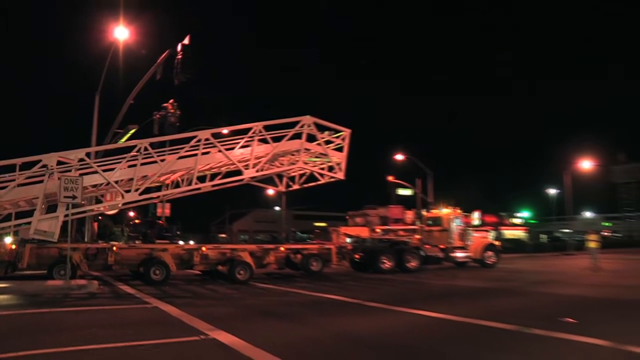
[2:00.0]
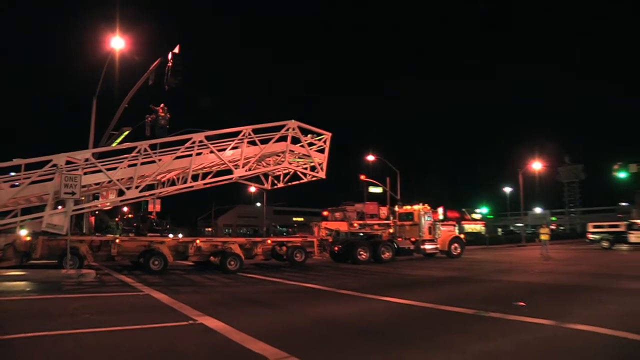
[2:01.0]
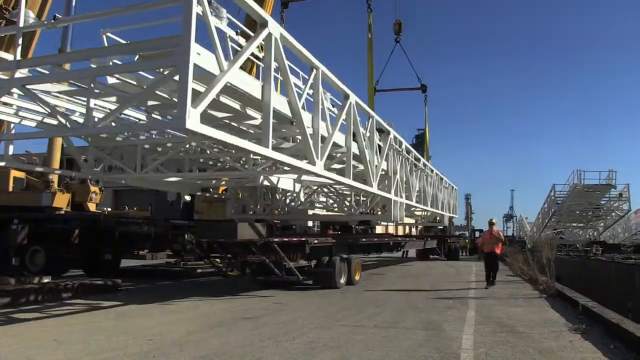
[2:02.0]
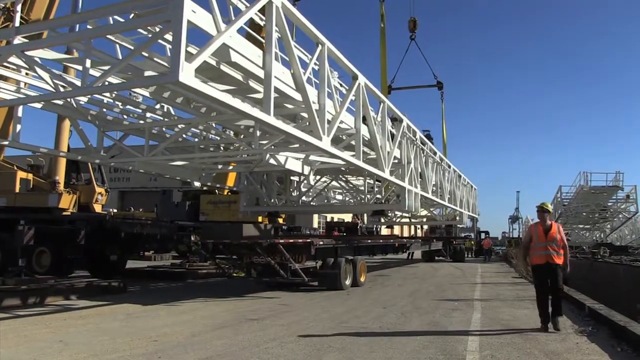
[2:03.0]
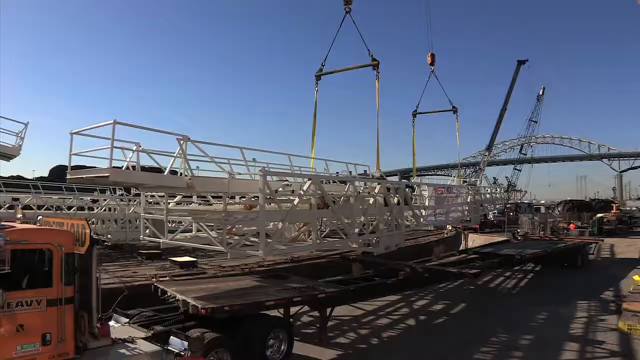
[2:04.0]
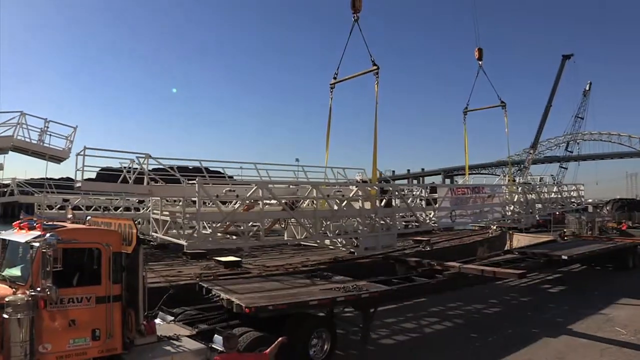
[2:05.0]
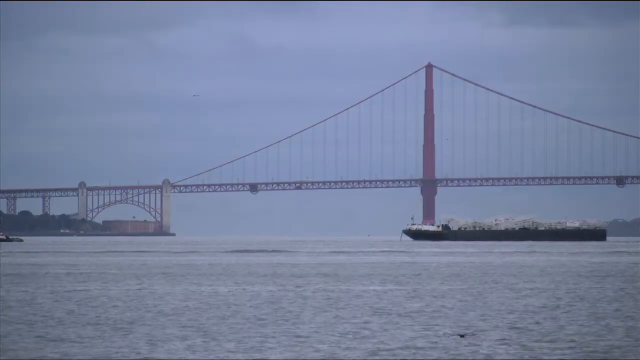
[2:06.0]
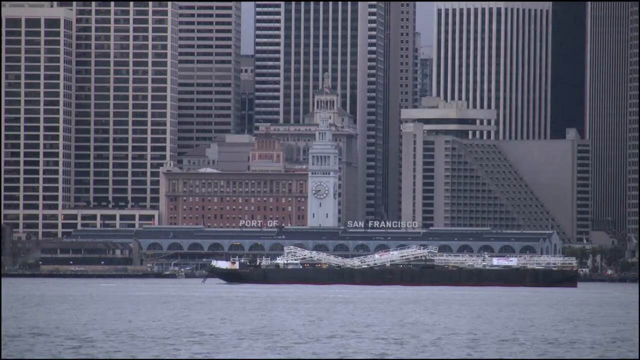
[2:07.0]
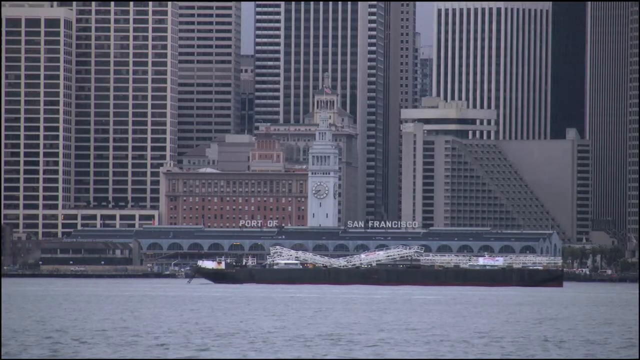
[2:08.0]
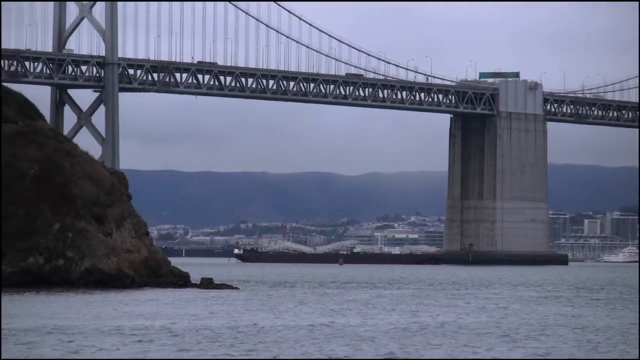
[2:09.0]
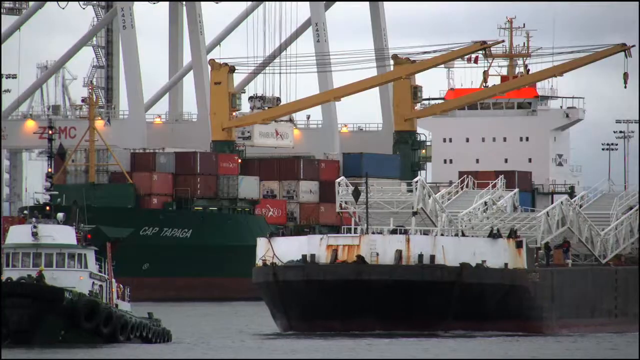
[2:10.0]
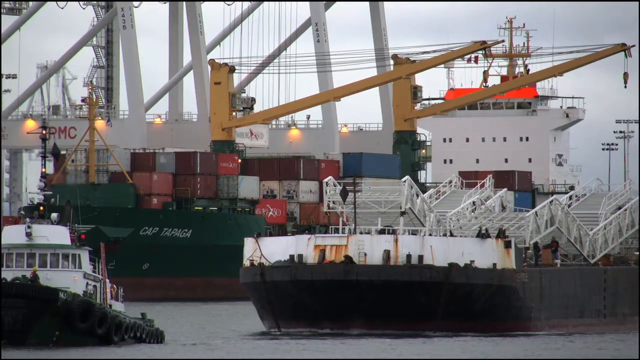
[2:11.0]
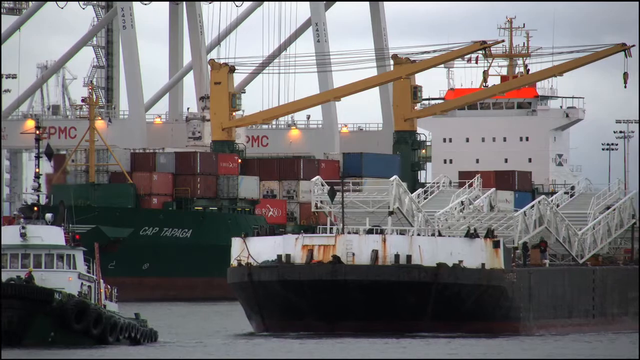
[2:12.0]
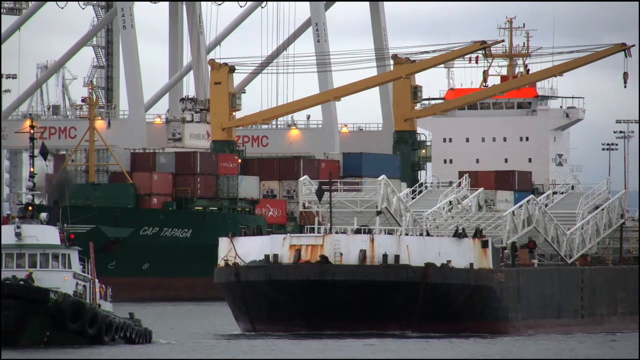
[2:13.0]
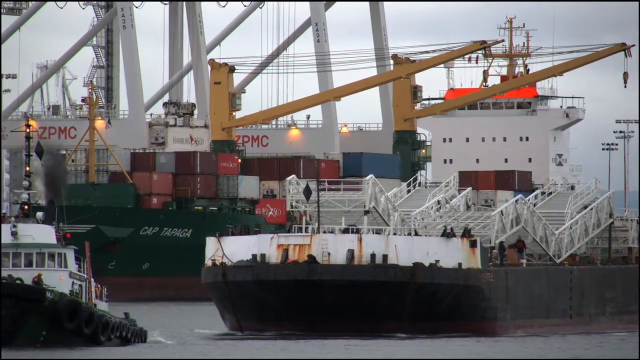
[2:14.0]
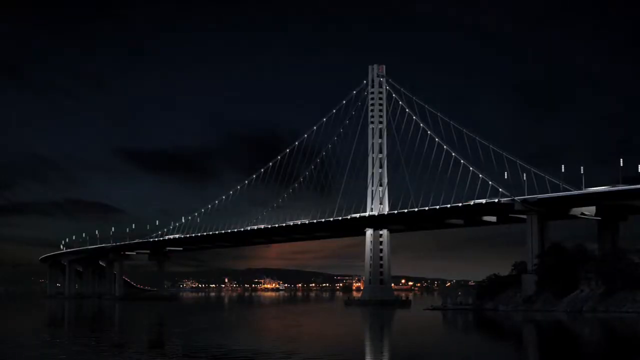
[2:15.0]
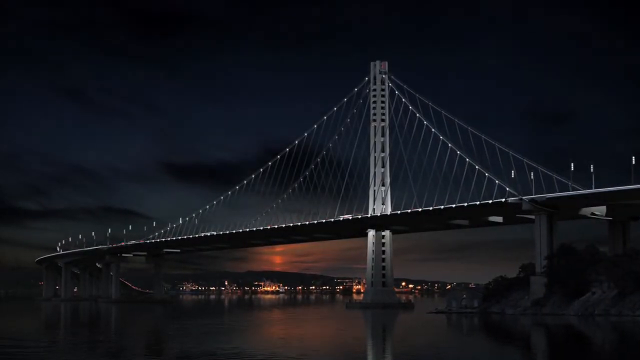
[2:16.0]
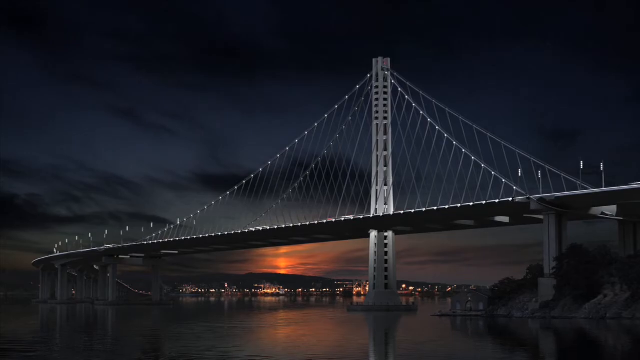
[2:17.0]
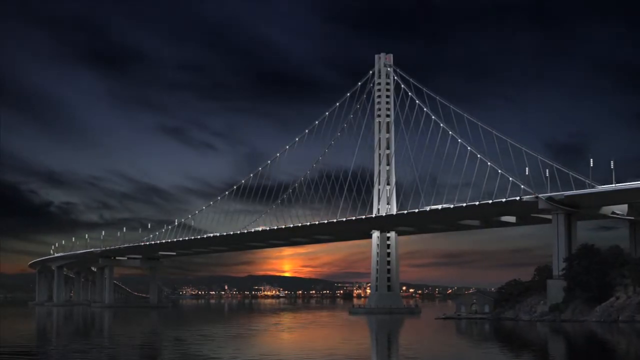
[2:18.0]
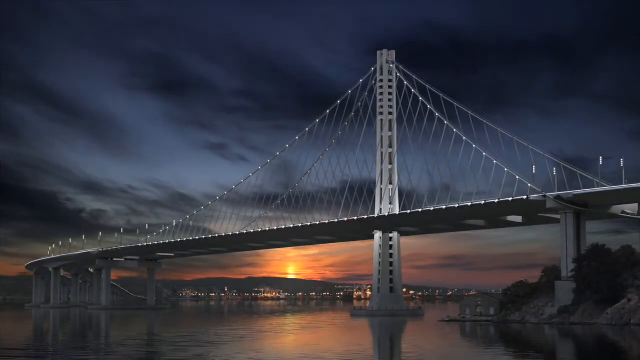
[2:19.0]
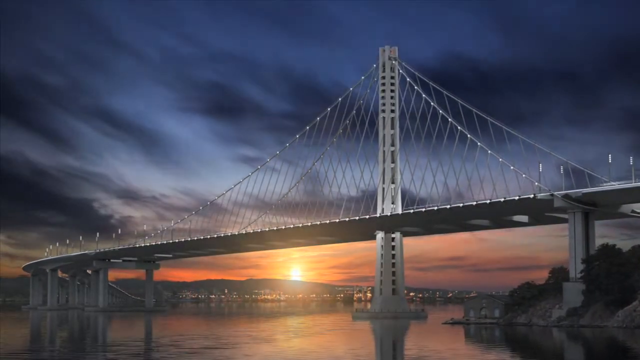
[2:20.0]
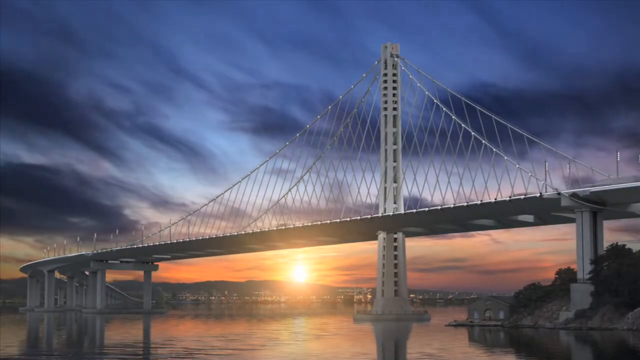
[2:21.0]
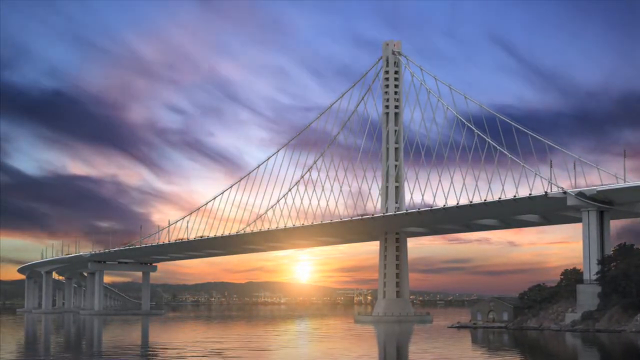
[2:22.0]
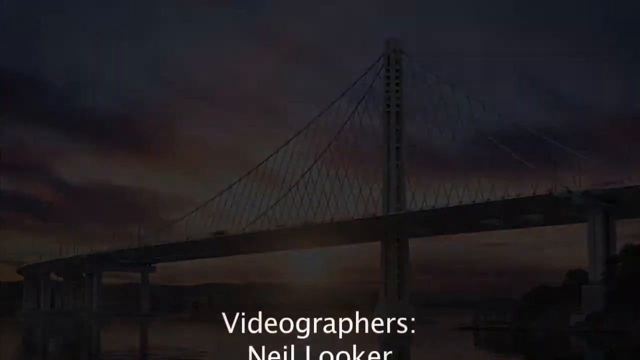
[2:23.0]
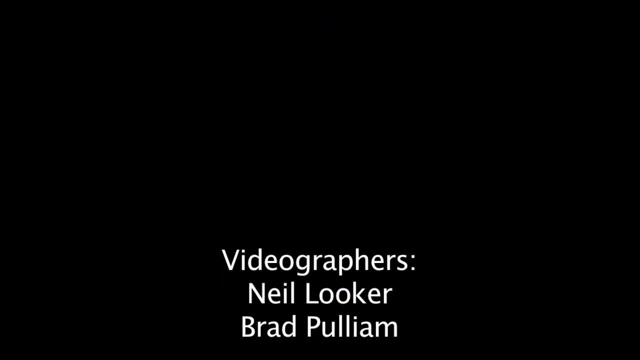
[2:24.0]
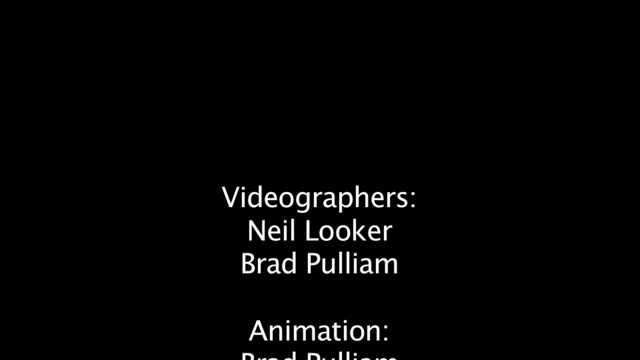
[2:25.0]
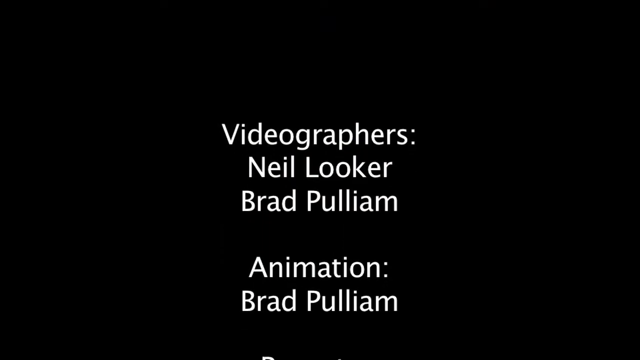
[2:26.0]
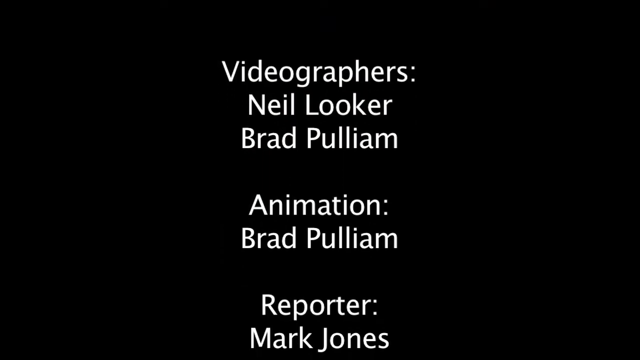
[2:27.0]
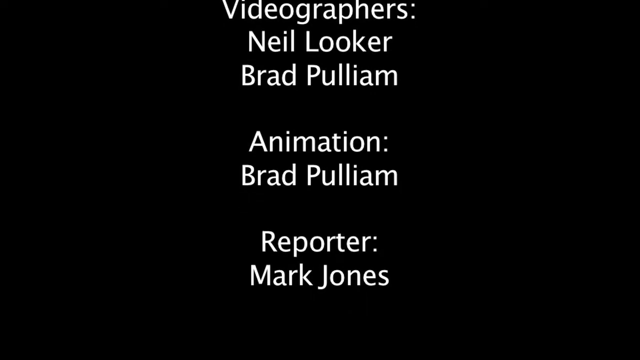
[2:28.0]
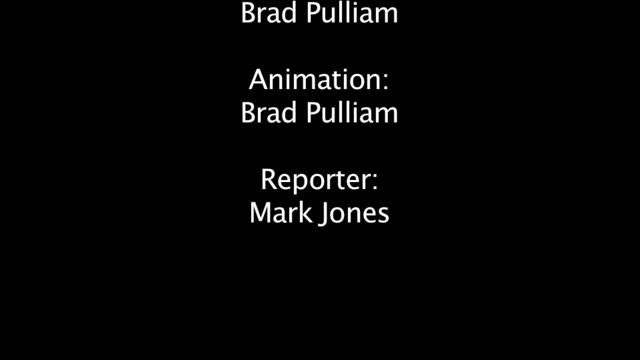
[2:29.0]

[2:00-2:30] The person in the bucket is sort of directing things. The scene transitions from nighttime to daytime, where it looks like they have arrived. The white beams, cranes, equipment and a construction worker on the road are visible as they lift and move it to its destination spot. Several construction cranes are used to take it off the orange cab truck and move it to where the rest of the pieces are. The scene changes to a bridge over water, with a large barge near the bridge, under a daytime but darkish gray, overcast sky. The scene shifts to skyscraper buildings, with "port of San Francisco" on top in all-uppercase white letters and the boat or barge in front of that. The bridge is shown as the camera slowly pans back. Then the port area appears, with different working ships used for transport. The bridge appears again, now seemingly at nighttime; the sun looks like it might be setting in the distance, and the sky is fairly black except for a slight orange glow. It then looks like it might actually be morning, with the sun rising, as it gets lighter and lighter and creates a kaleidoscope of colors. Credits appear, saying "videographers, Neil Luker, Brad Pulliam, animation Brad Pulliam" and "reporter Mark Jones".